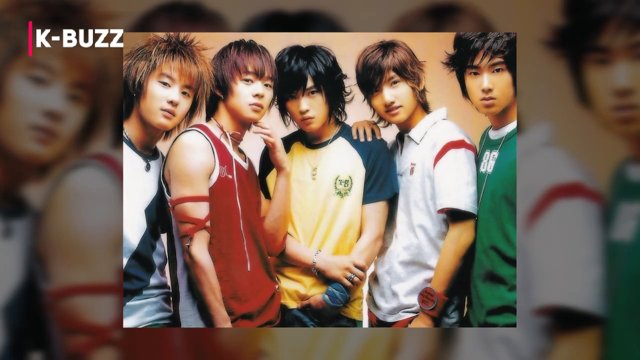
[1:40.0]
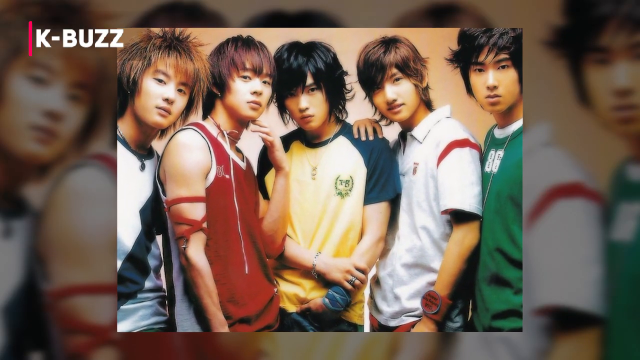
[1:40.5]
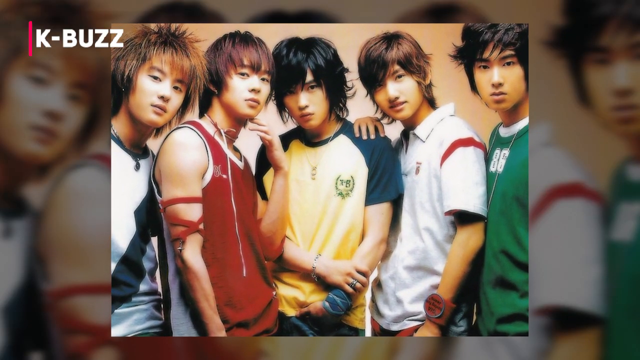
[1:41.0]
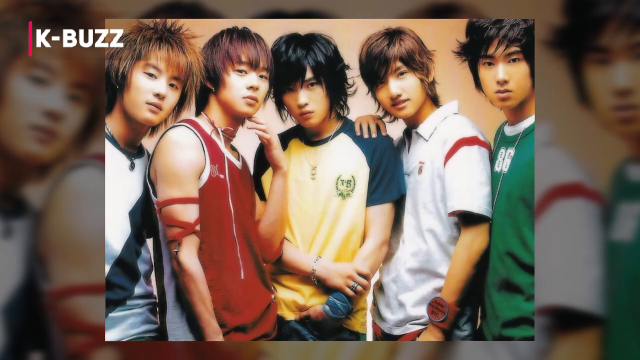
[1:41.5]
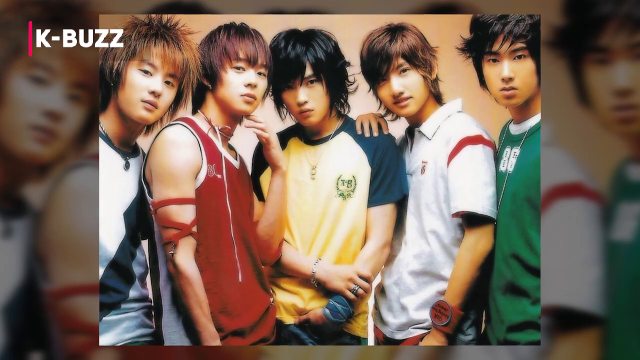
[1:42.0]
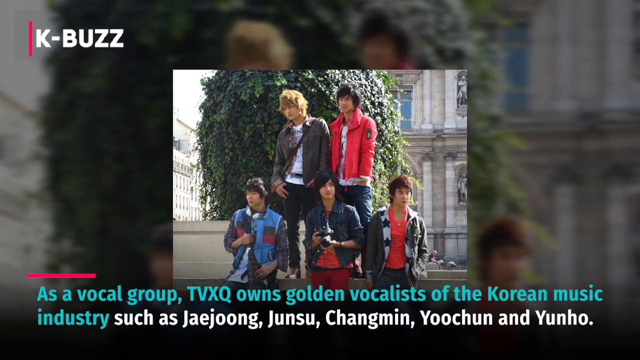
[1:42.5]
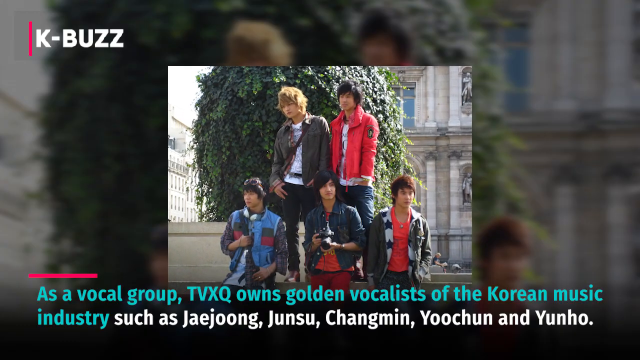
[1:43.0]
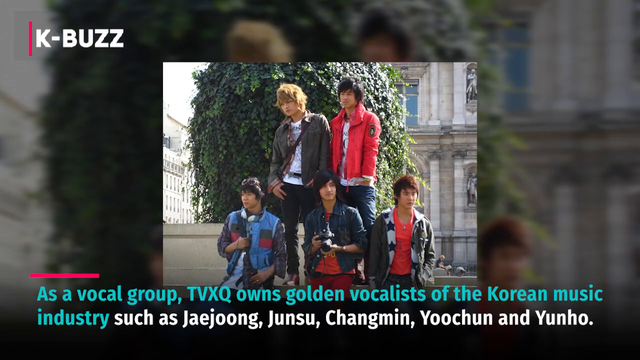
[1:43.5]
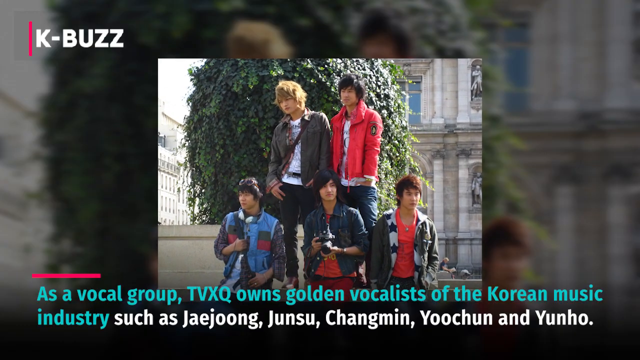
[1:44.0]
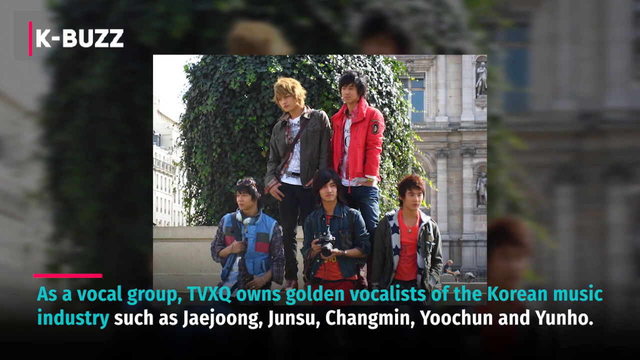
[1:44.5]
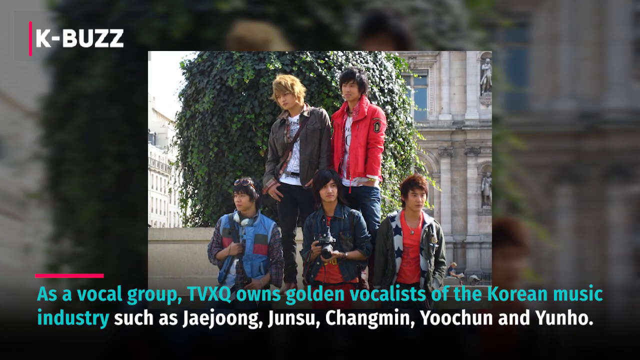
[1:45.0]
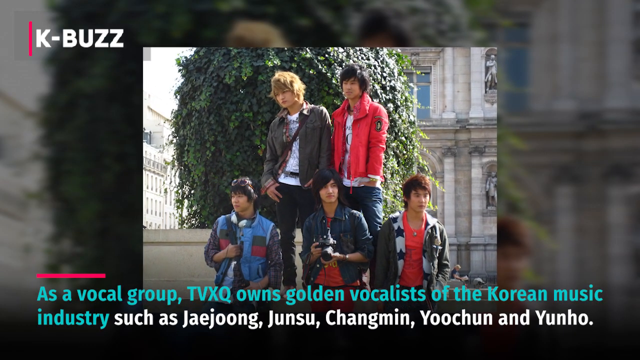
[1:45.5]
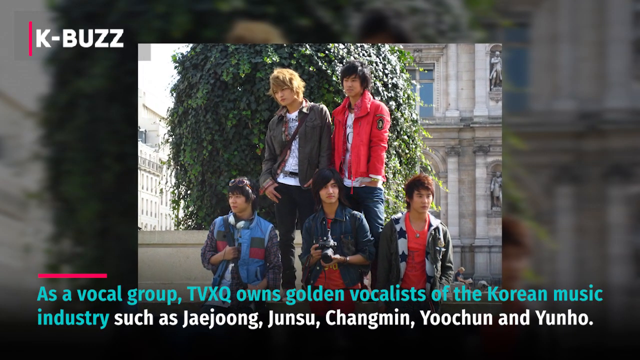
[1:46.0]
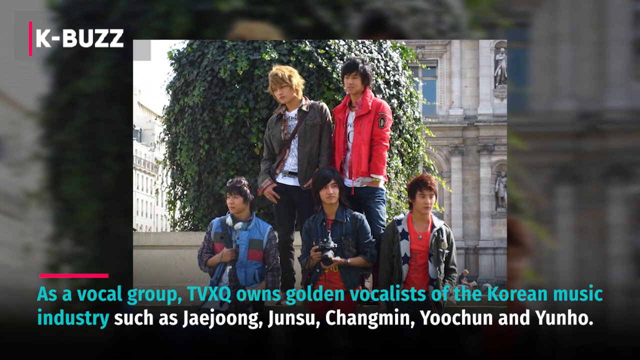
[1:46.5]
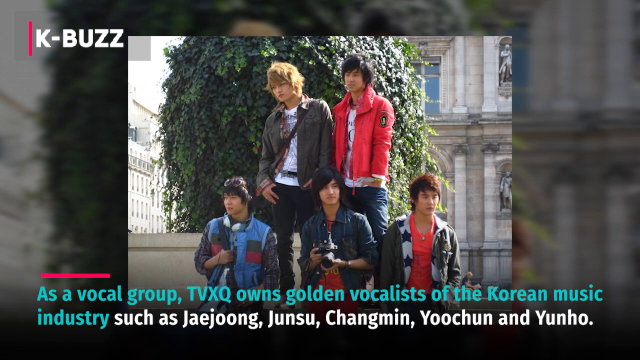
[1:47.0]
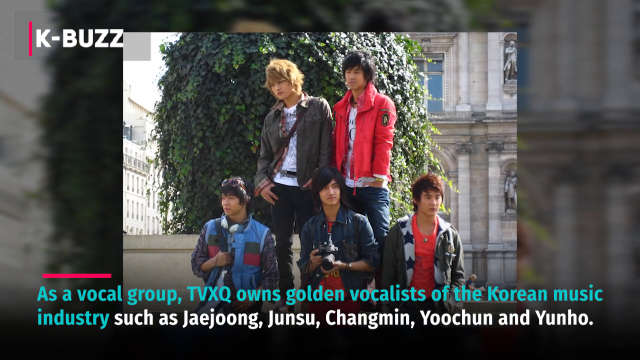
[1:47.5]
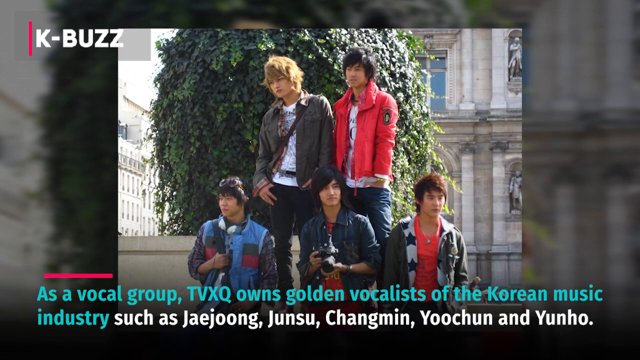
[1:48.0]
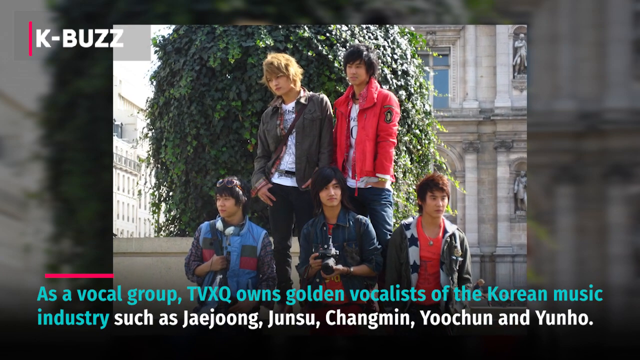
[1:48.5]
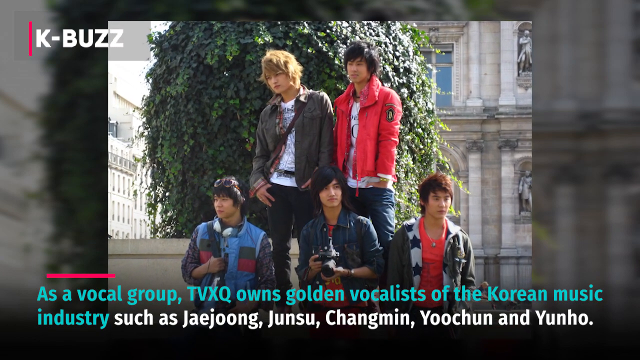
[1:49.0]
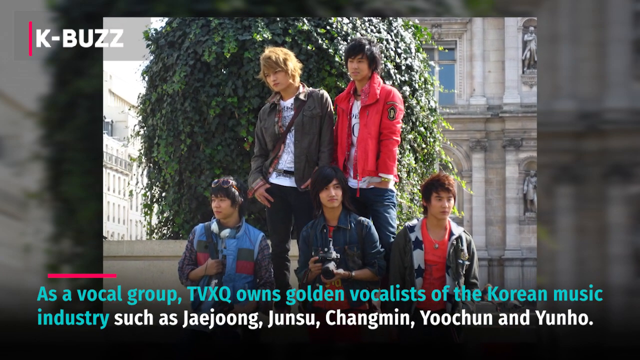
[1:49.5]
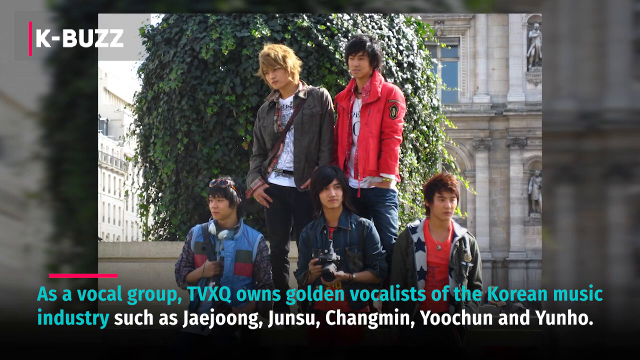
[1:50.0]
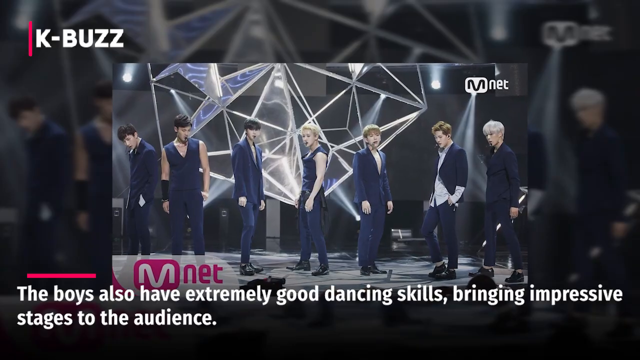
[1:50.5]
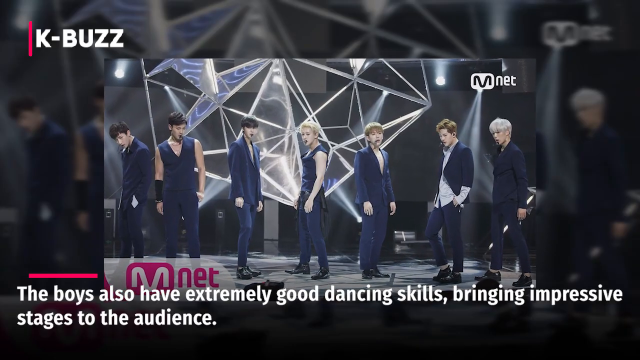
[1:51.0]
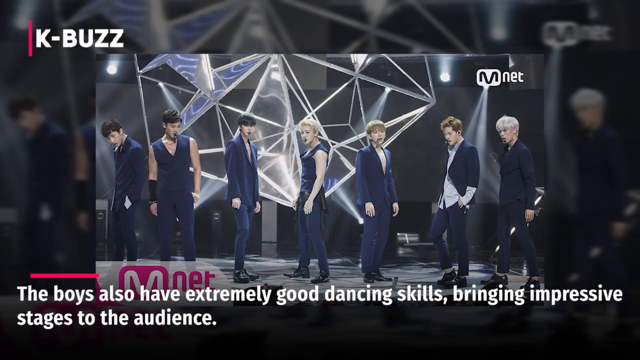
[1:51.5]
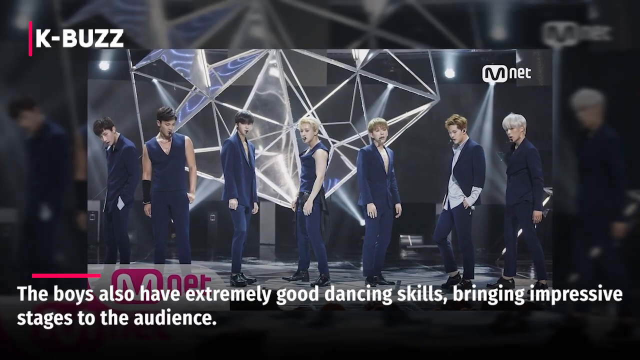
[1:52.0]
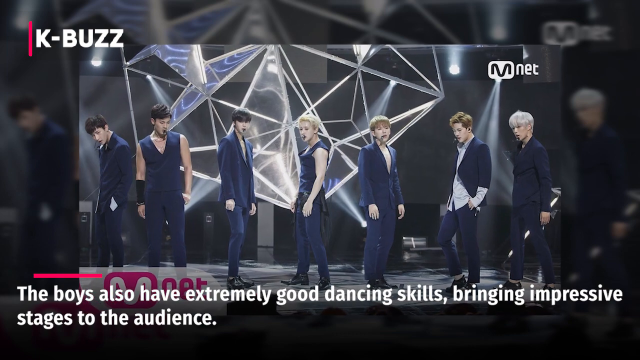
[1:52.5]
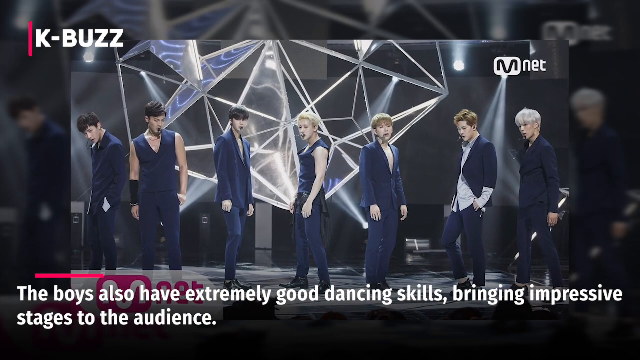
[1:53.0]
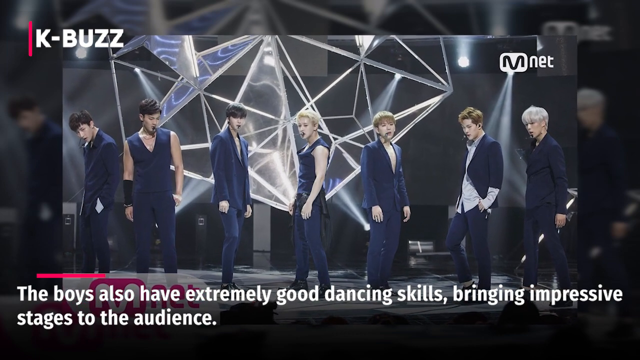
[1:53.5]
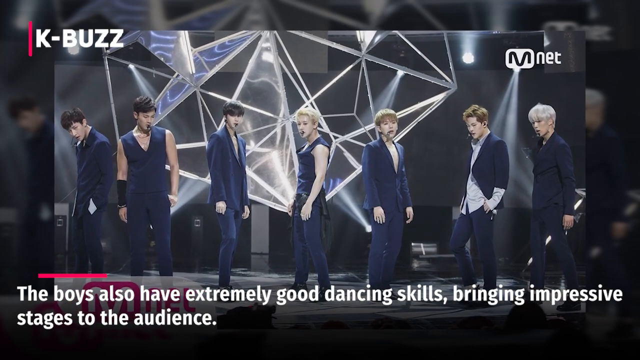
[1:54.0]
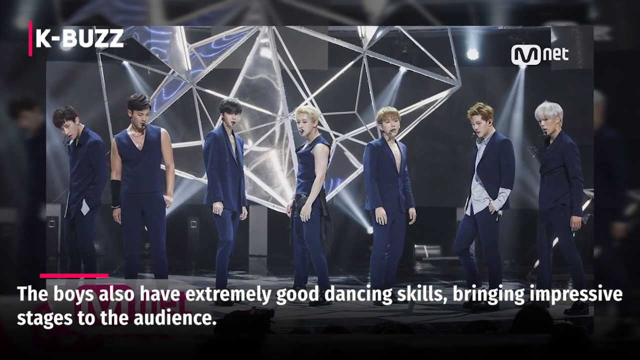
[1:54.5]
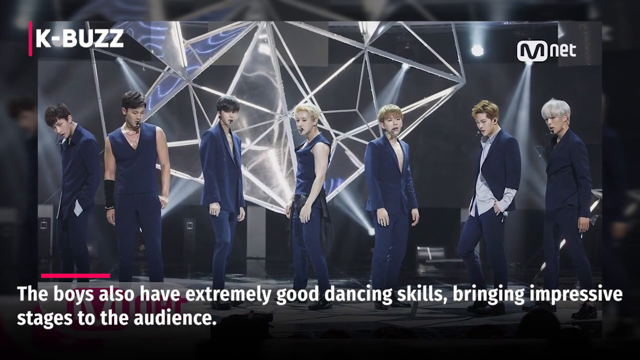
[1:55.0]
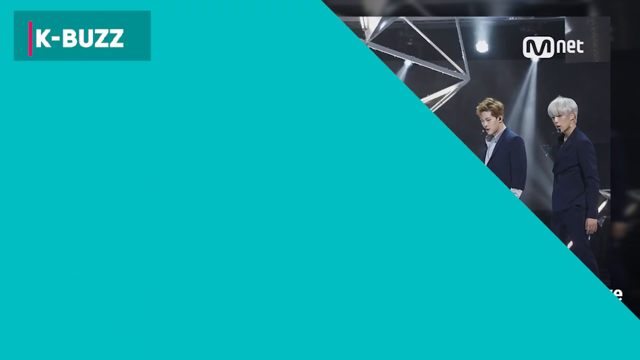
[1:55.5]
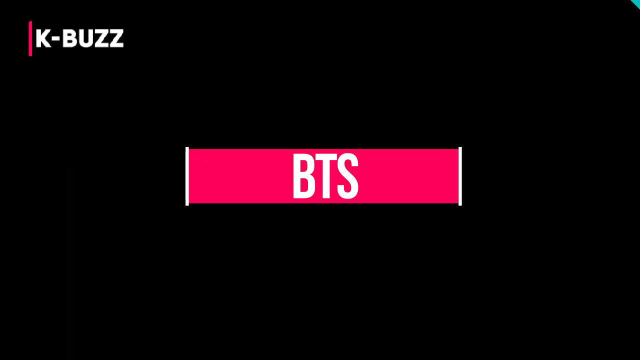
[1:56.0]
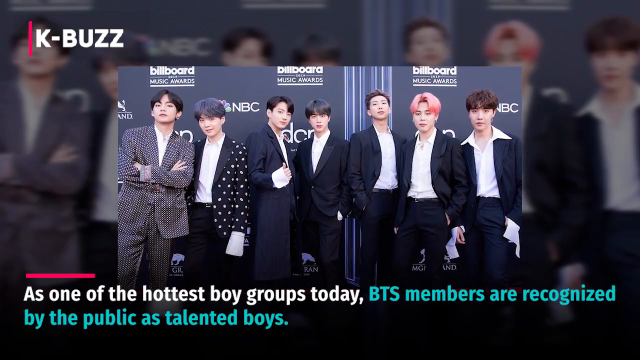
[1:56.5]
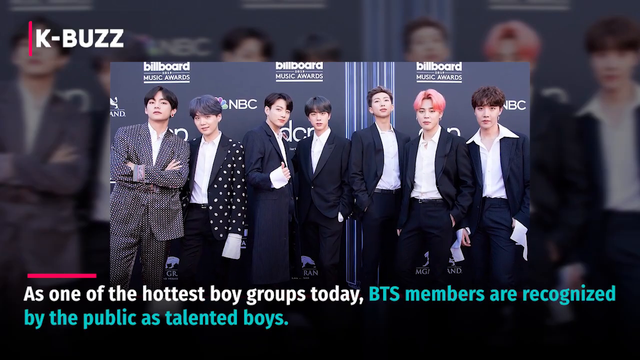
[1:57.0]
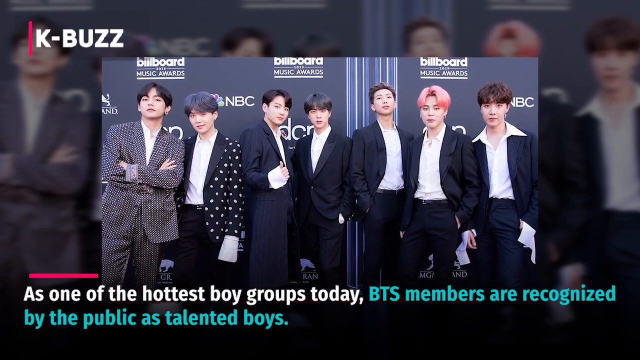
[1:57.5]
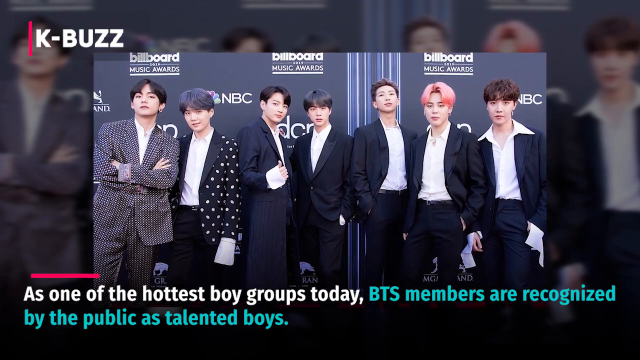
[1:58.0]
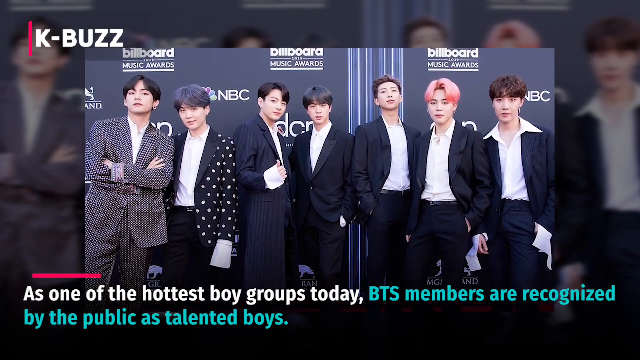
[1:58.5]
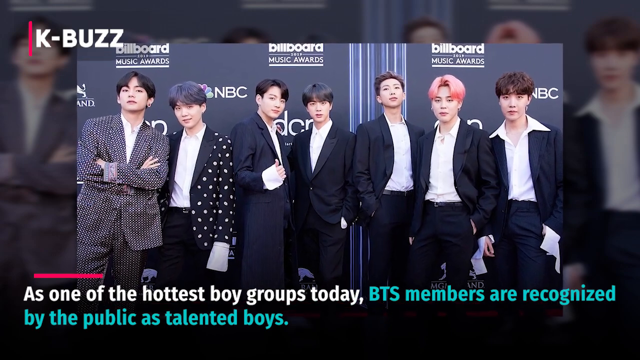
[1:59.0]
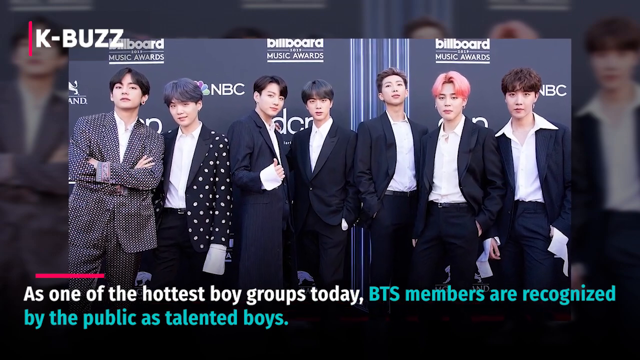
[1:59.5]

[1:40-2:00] The older photo of TVXQ continues, with each member wearing a shirt: the one on the far left wears white with a diagonal black stripe; the next wears a red tank with a red string or band around his upper right arm; the one in the middle has a yellow shirt with black sleeves; the next has a white polo shirt with a red stripe where the sleeve meets the shirt; and the last has a green shirt with a white hem around the neck. Another picture of TVXQ appears to be taken outside in front of a European-style building, with text at the bottom: "As a vocal group, TVXQ owns golden vocalists of the Korean music industry, such as Jaejoong, Junsu, Changmin, Yoochun, and Yunho." Next is a still from a live performance at a TV studio, with the word "MNET" in white at the top right and in pink at the bottom left of the screen. The members are on stage in navy outfits, each different but uniform in color and style. Underneath is the text "The boys also have extremely good dancing skills bringing impressive stages to the audience." After another green transition from bottom left to top right, a red banner in the center of the frame shows "BTS" in white. A photo follows of the seven members of BTS, appearing to pose for the cameras on the red carpet at a live event. At the bottom is the text "As one of the hottest boy groups today, BTS members are recognized by the public as talented boys."